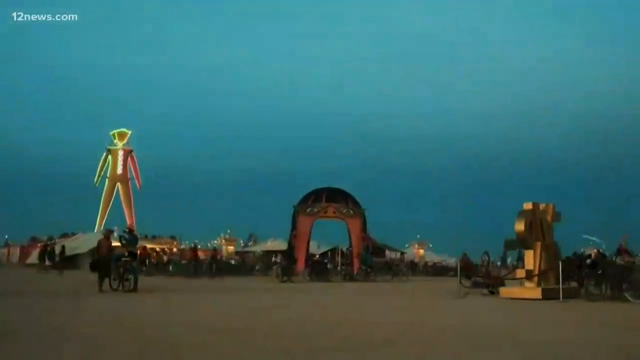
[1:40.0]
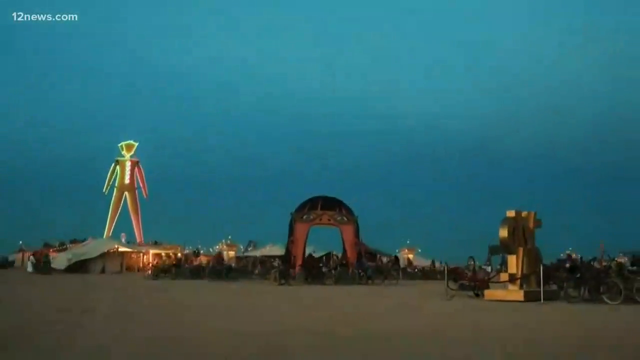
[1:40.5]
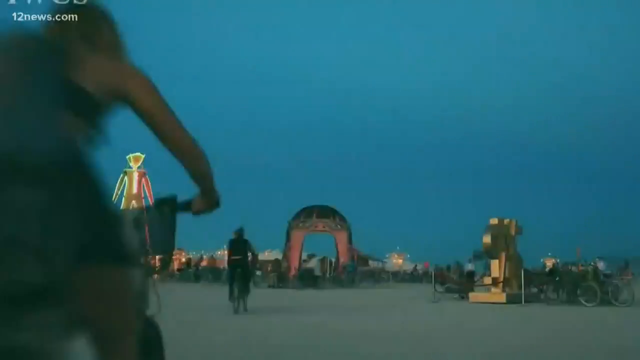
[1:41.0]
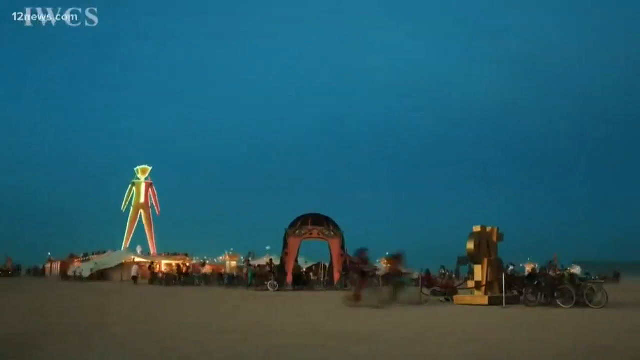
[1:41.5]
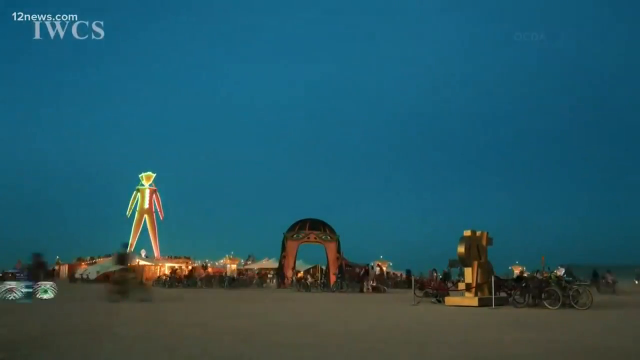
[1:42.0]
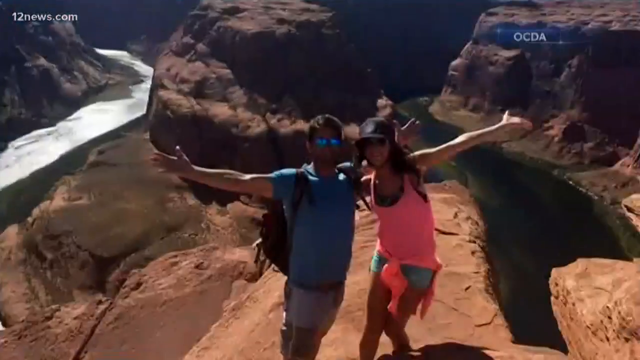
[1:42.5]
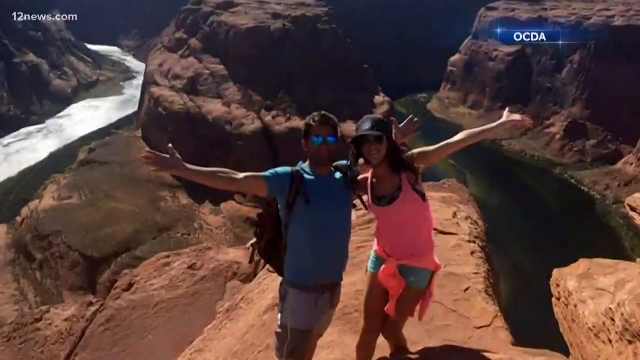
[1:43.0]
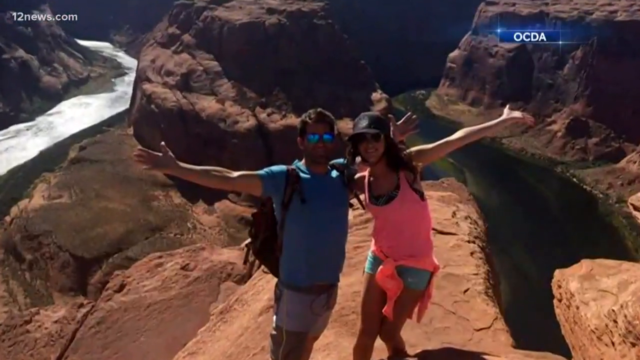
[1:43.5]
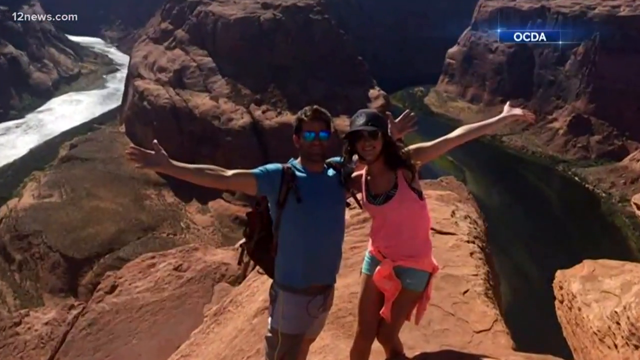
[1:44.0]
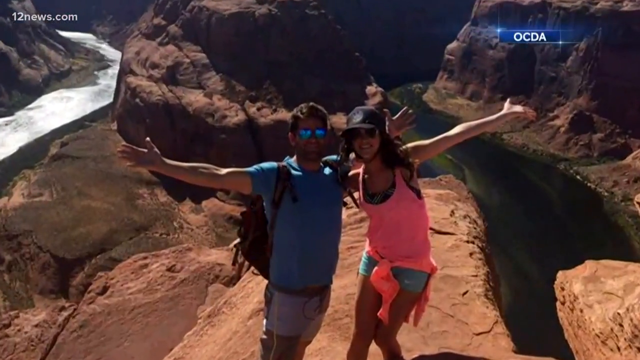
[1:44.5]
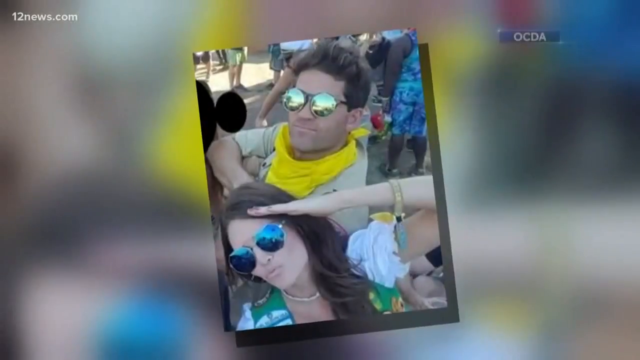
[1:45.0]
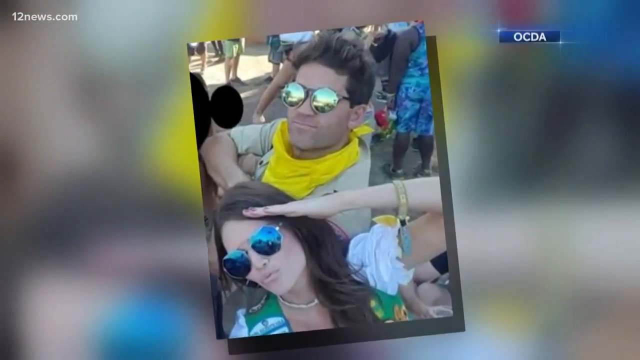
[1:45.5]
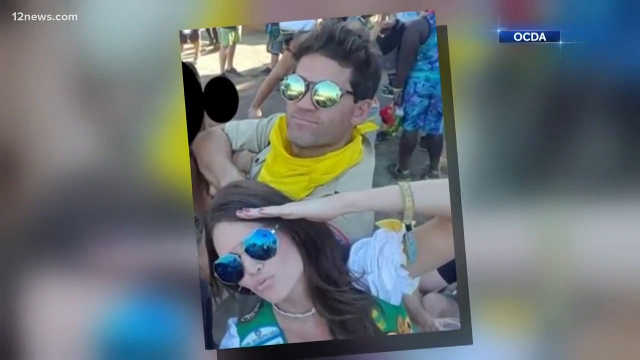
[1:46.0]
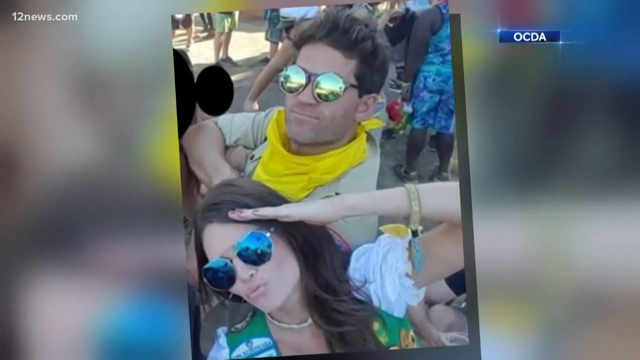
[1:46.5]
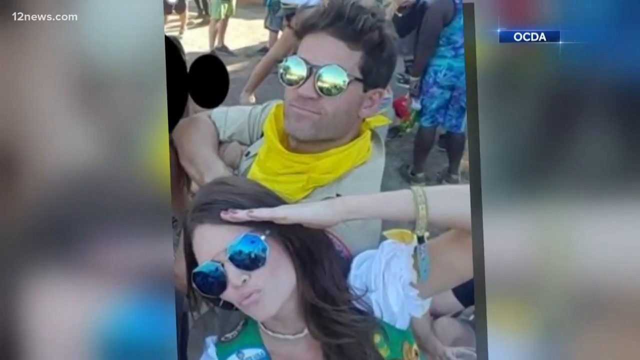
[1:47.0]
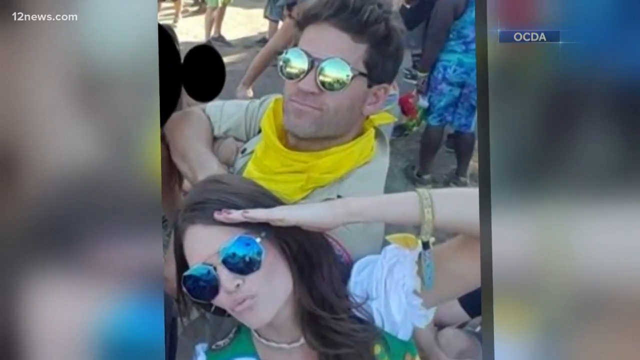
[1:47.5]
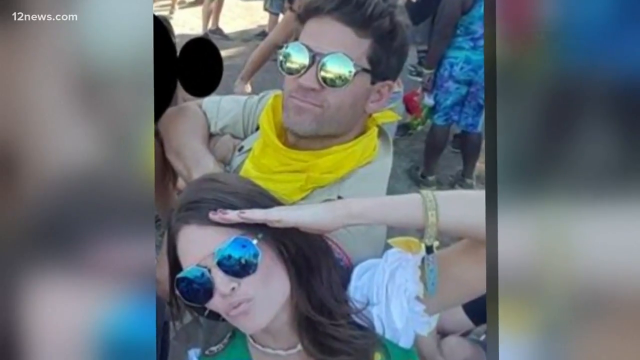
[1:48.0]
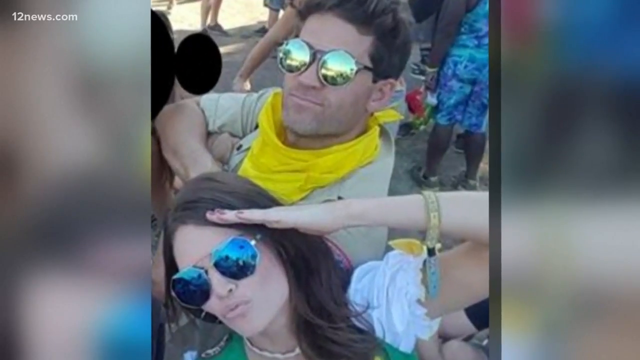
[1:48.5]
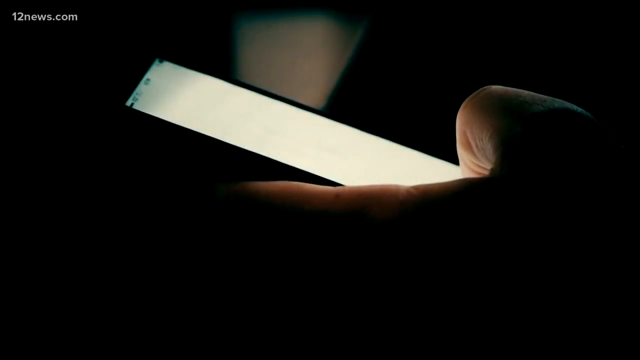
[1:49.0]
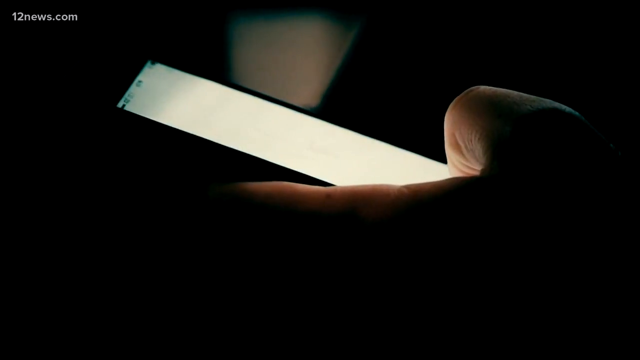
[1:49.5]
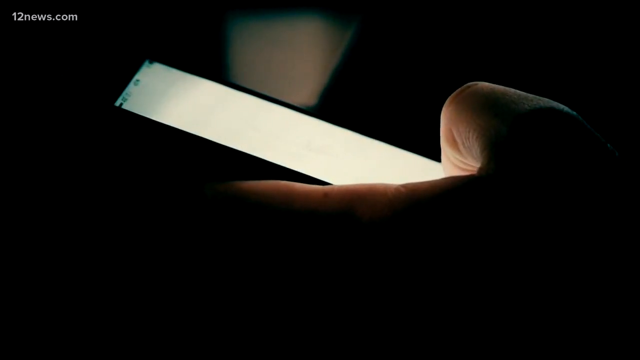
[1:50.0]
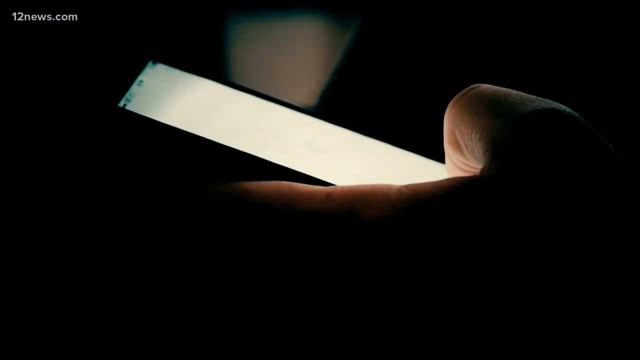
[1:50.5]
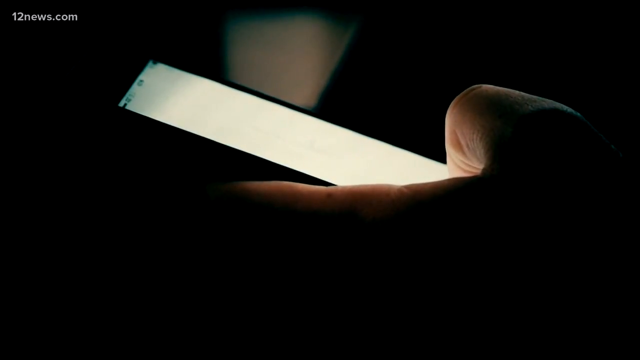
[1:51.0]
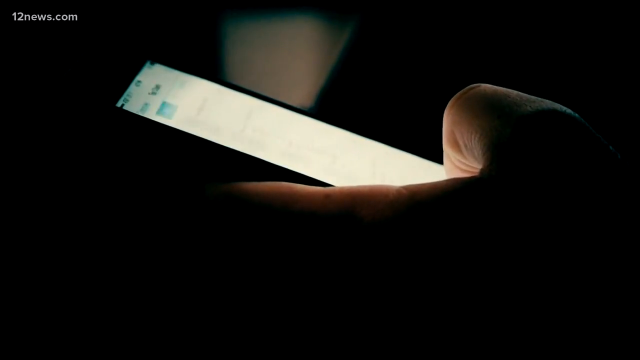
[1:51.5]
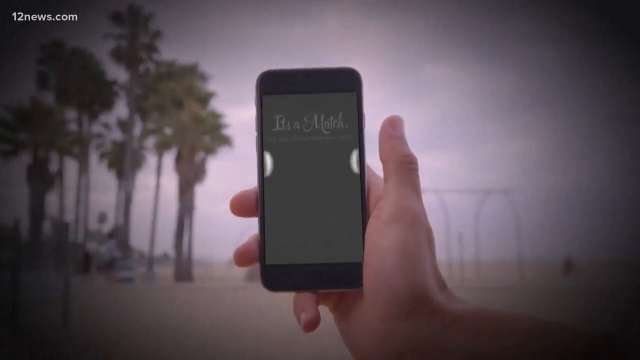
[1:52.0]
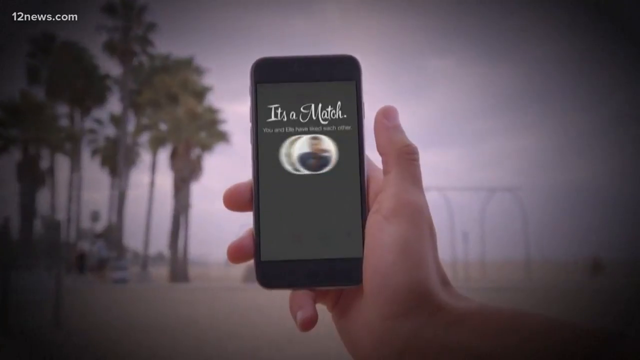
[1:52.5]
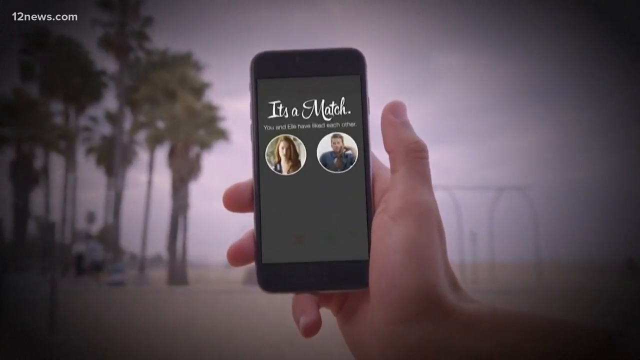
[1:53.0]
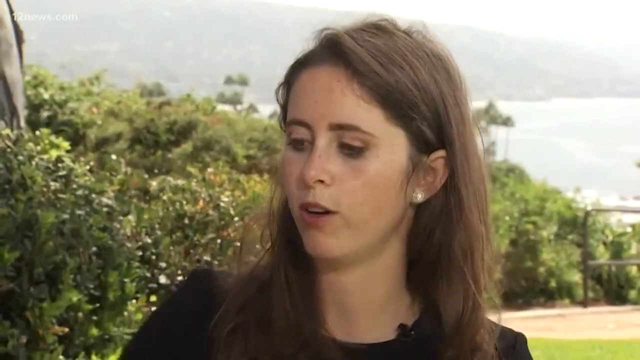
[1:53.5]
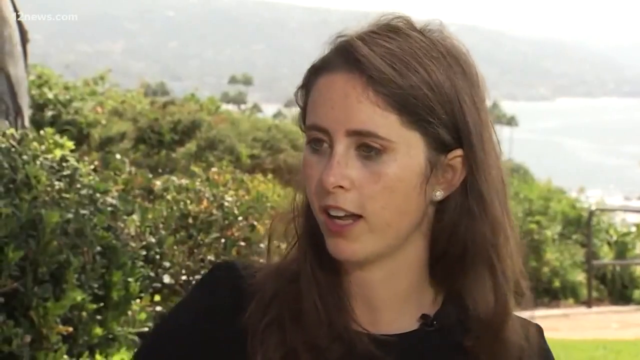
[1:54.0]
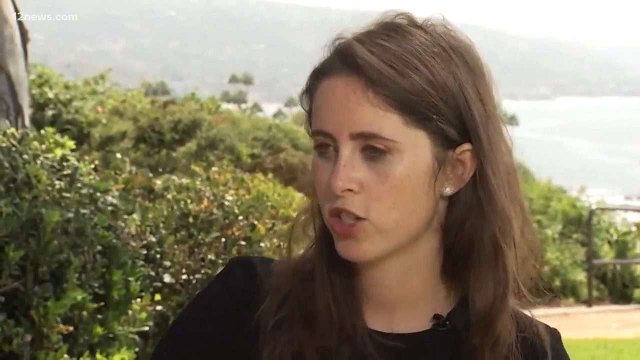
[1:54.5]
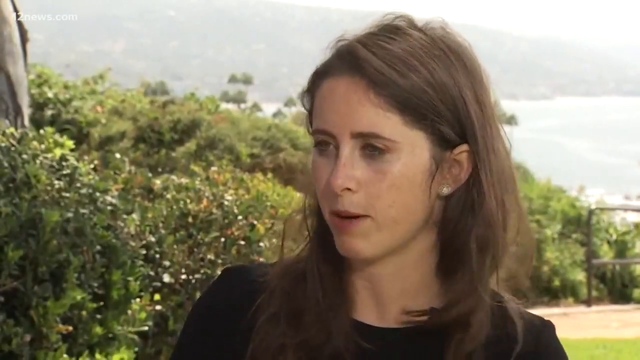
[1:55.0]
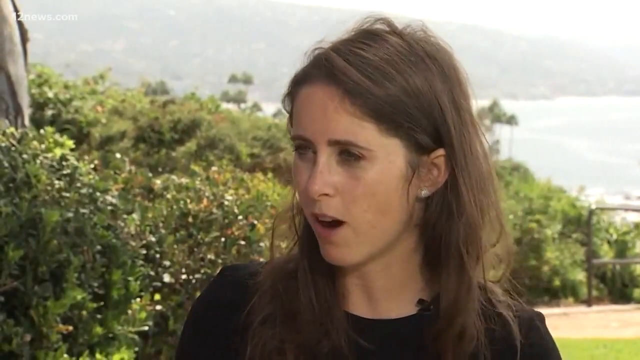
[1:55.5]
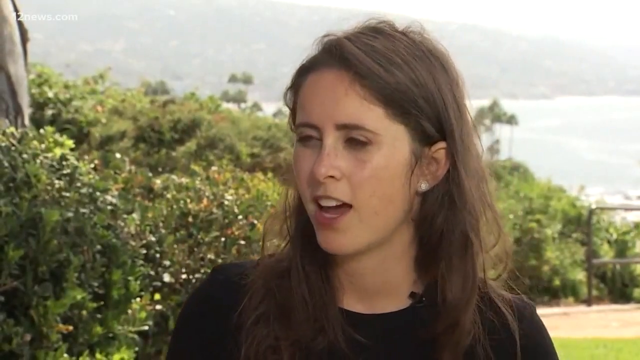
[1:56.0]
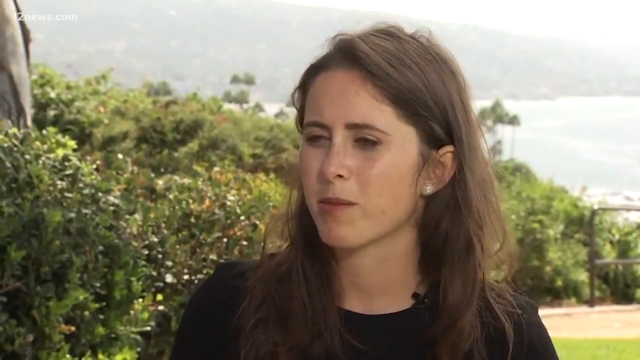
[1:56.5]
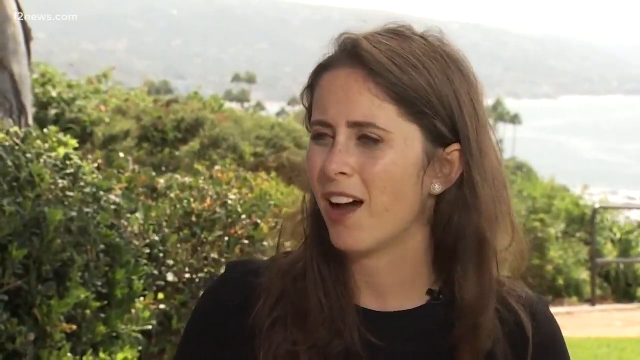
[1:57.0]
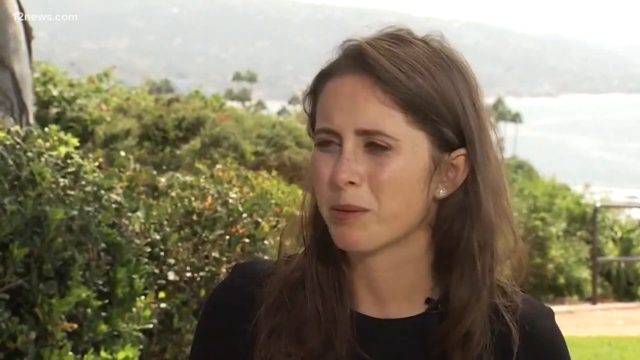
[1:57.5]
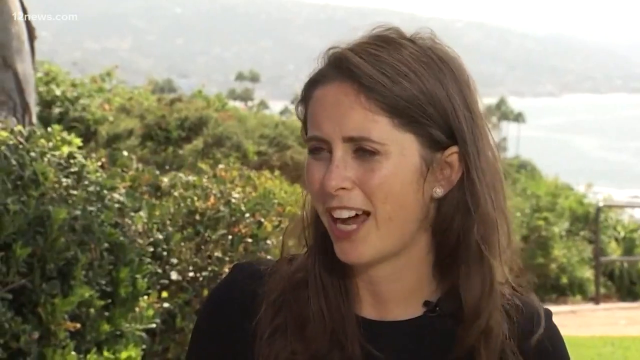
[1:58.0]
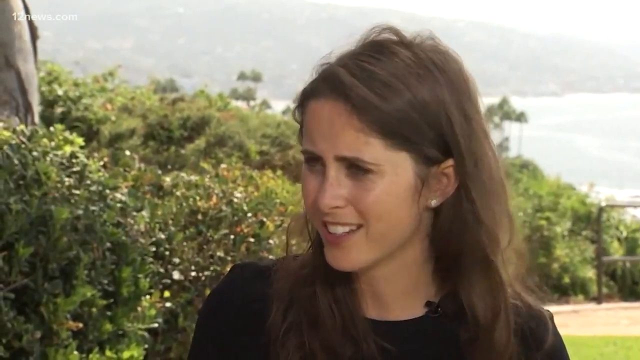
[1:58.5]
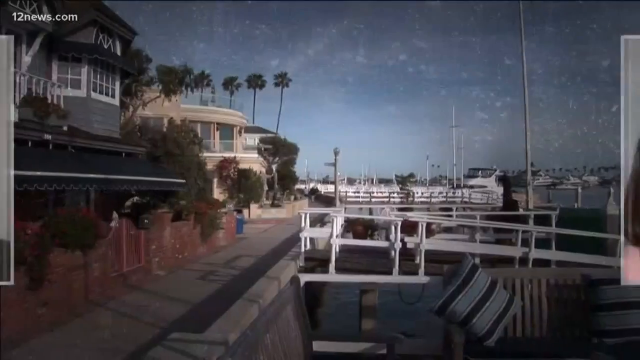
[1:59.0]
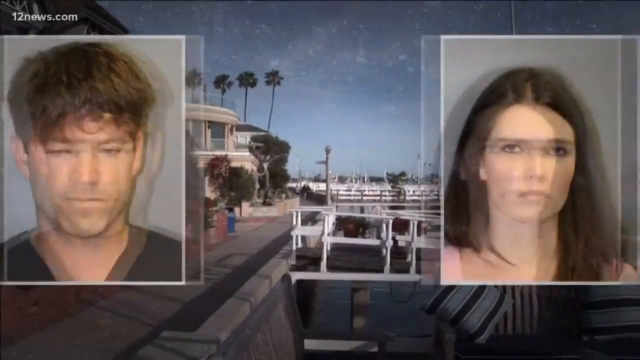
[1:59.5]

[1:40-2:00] What first seems to be an animation turns out to be real time-lapse footage, with things moving fast, of what might be a park or part of the beach at night. There looks to be a tall statue on the left side, with a green outline and a brown person. The sky is lime green and blue, and there might be the ocean or water. There are lit-up things on the ground, someone on a bicycle, and two people talking. "12news.com" is in the upper left corner. Another still shot shows the man on the left in a blue shirt and the woman on the right in a pink shirt, both in sunglasses, his blue and hers brown, and she wears a baseball cap. "OCBA" is in the upper right corner. The area is apparently rocks, with a lot of brown, a little bit of a creek on the left side and a lot of rocky terrain on the right. Another smaller shot of the man and the woman follows. Then the video goes back to someone using a cell phone, and someone else using a cell phone, with trees, the sky and some of the beach in the background. Writing pops up on the phone saying "It's a match". A white woman with brownish hair and black earrings speaks in front of trees, shrubbery and bushes; behind her it looks foggy, on the beach or elsewhere, with a bit of a hill in the background. A view of some buildings and boats follows, looking like evening or morning. Then the mug shots of the man and woman pop up.